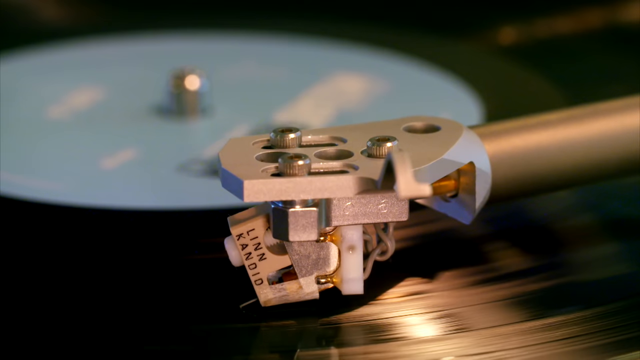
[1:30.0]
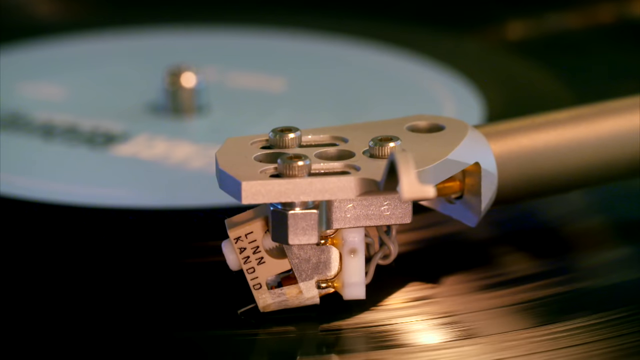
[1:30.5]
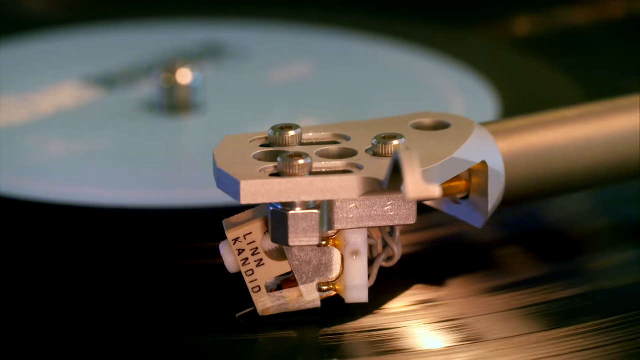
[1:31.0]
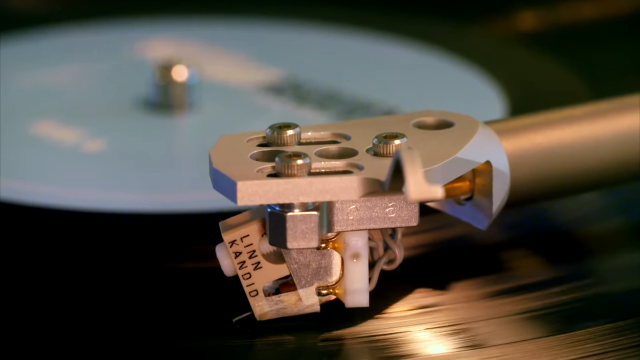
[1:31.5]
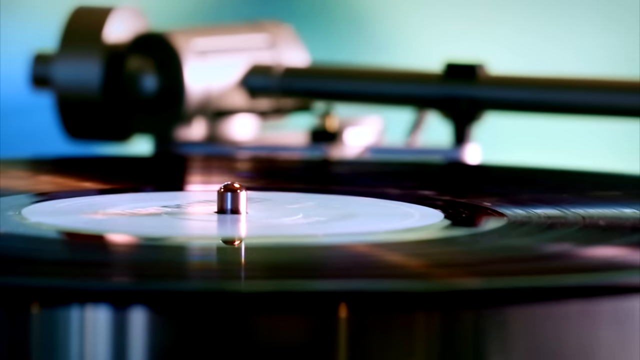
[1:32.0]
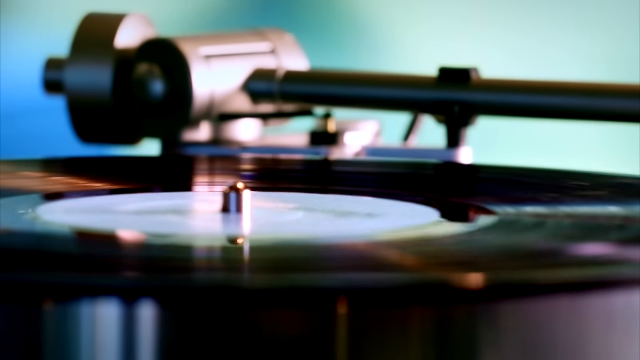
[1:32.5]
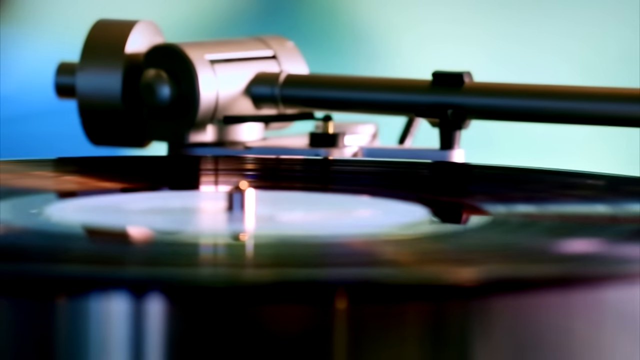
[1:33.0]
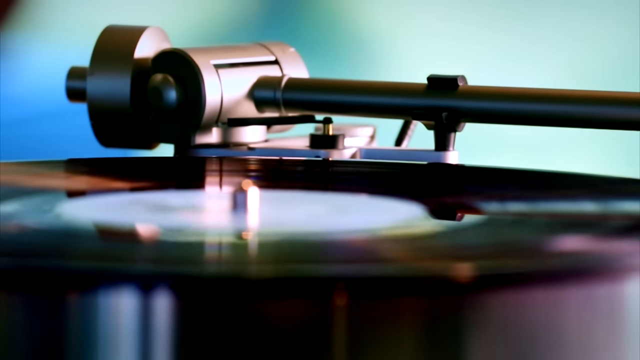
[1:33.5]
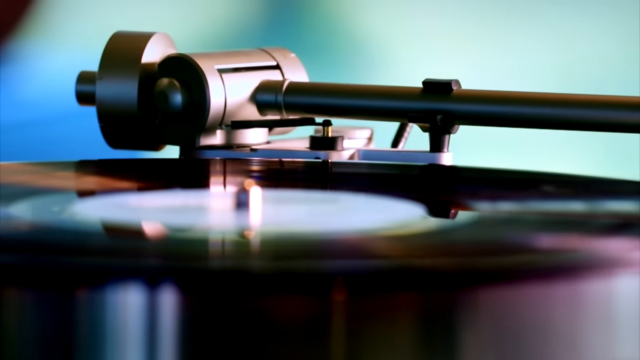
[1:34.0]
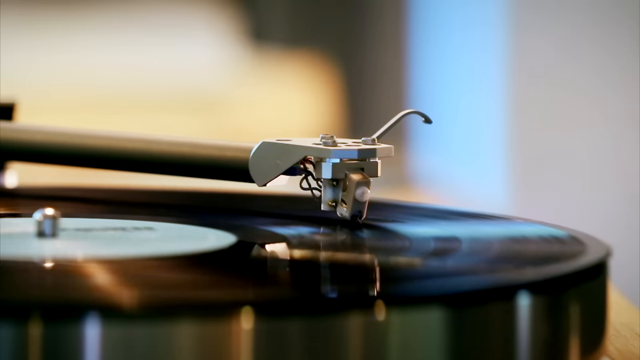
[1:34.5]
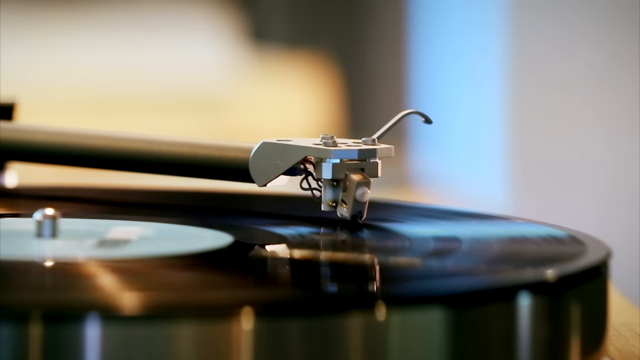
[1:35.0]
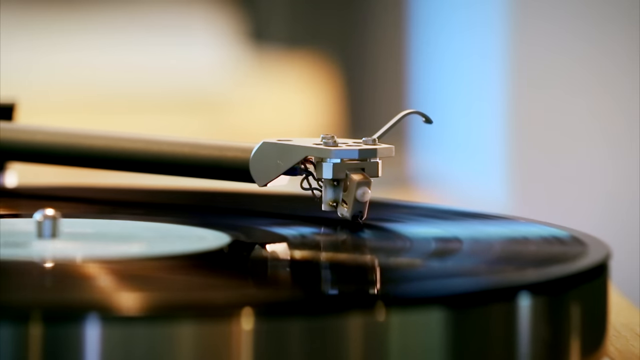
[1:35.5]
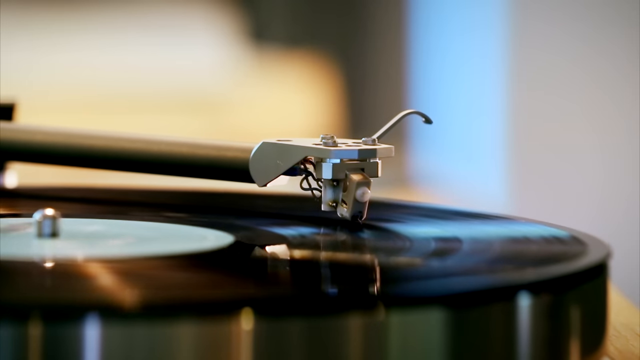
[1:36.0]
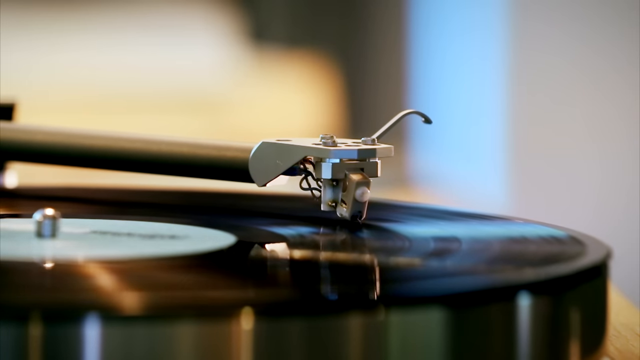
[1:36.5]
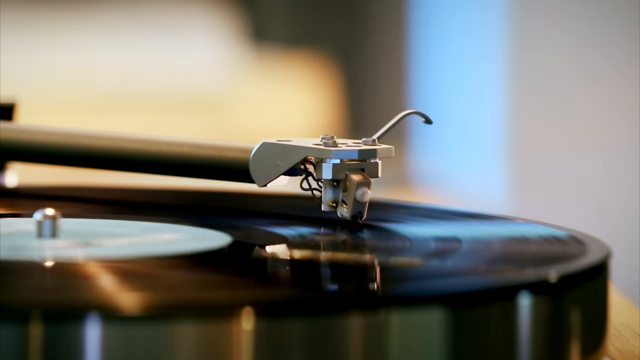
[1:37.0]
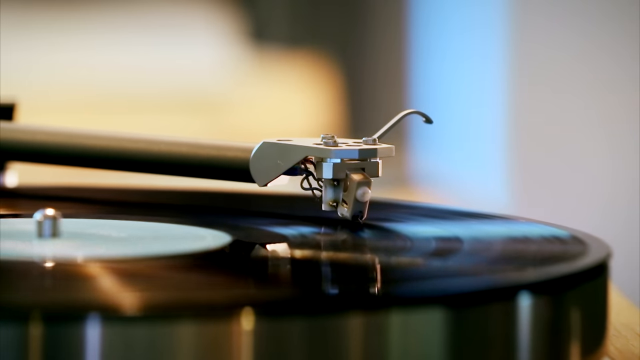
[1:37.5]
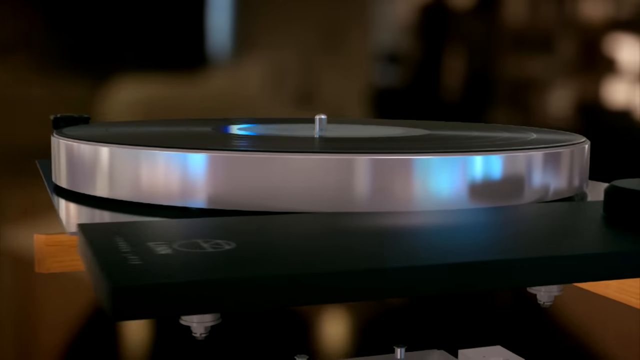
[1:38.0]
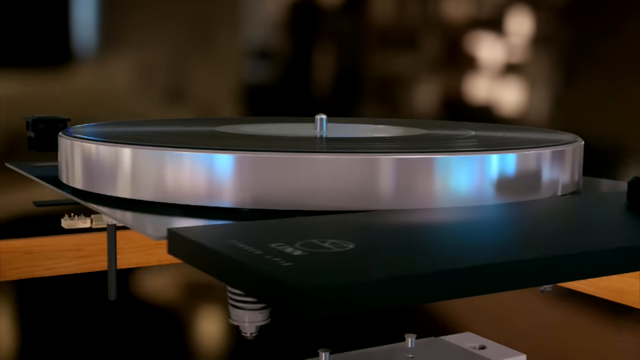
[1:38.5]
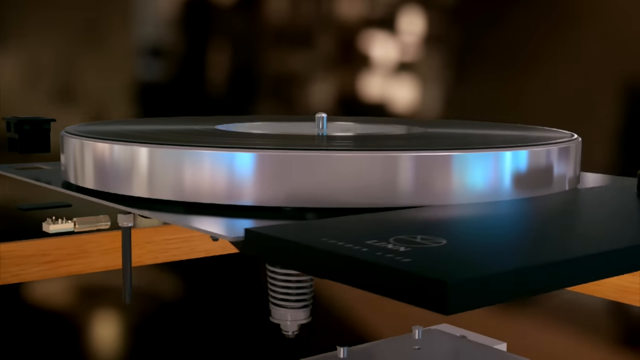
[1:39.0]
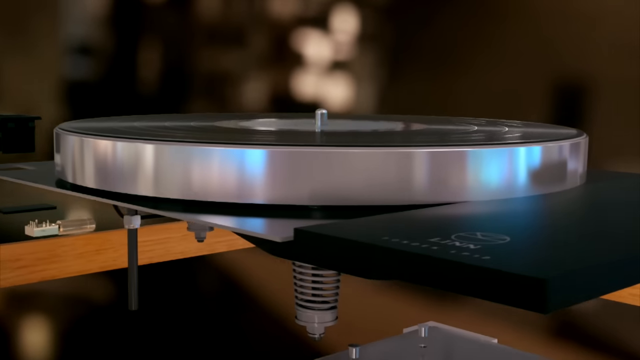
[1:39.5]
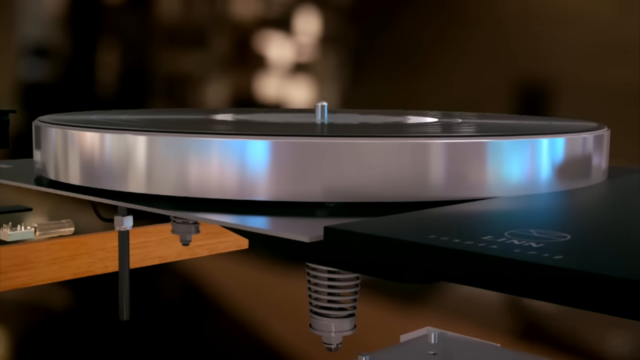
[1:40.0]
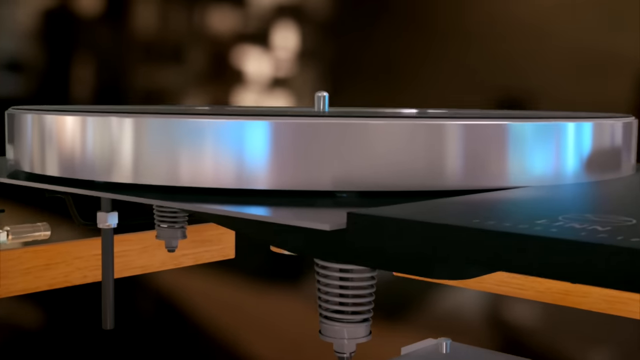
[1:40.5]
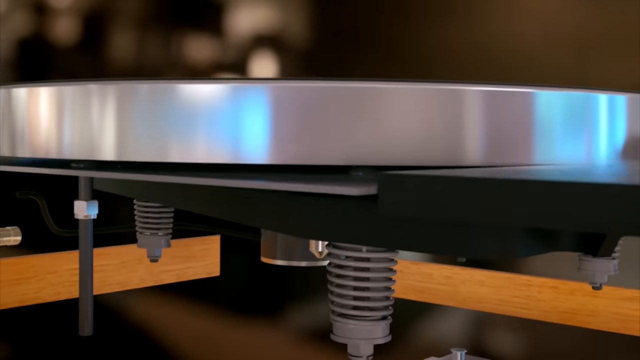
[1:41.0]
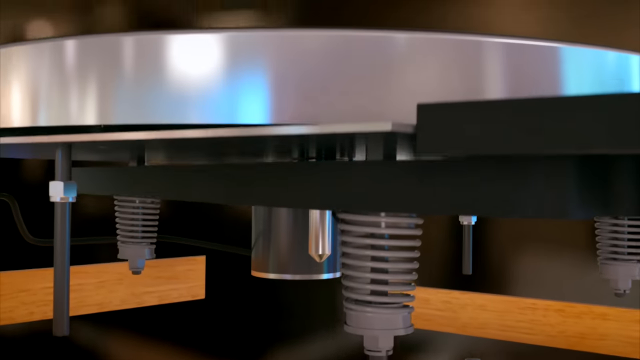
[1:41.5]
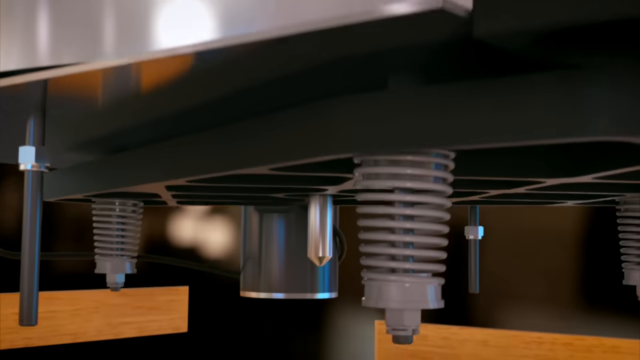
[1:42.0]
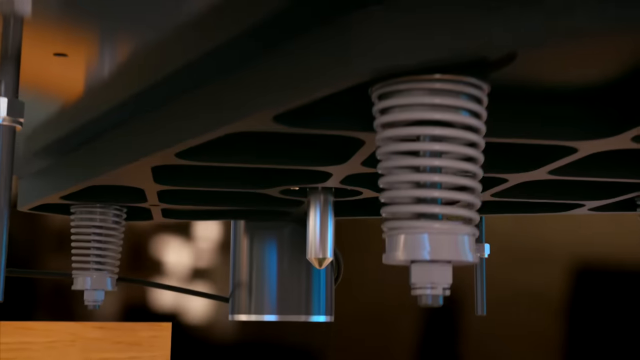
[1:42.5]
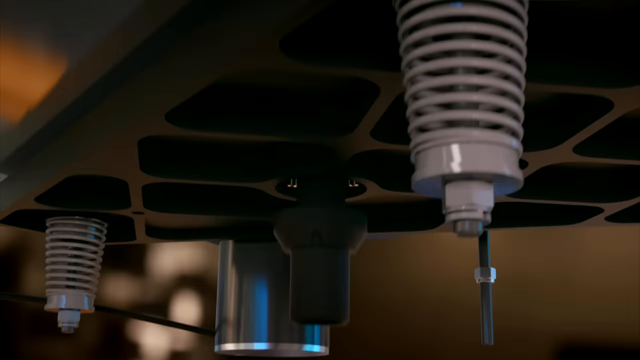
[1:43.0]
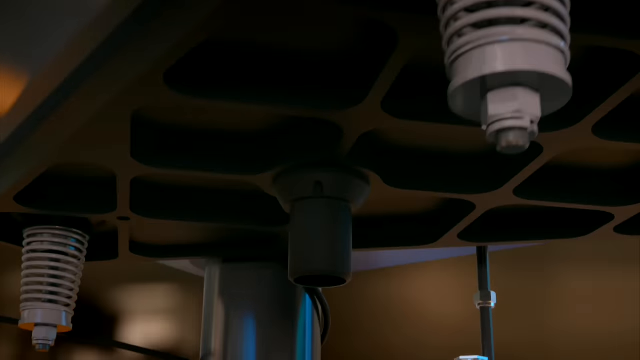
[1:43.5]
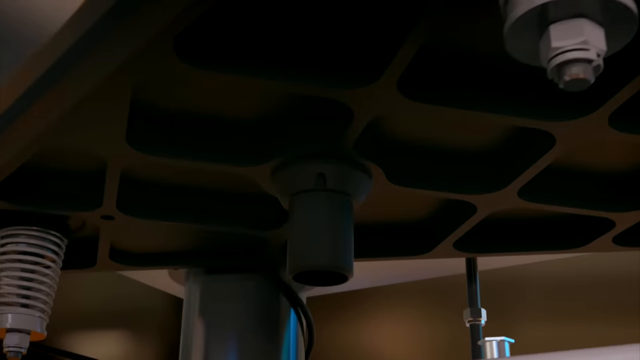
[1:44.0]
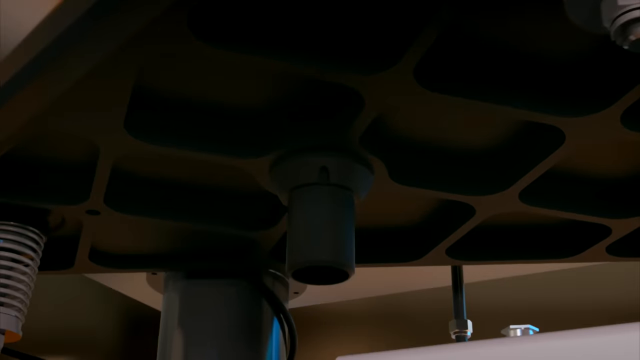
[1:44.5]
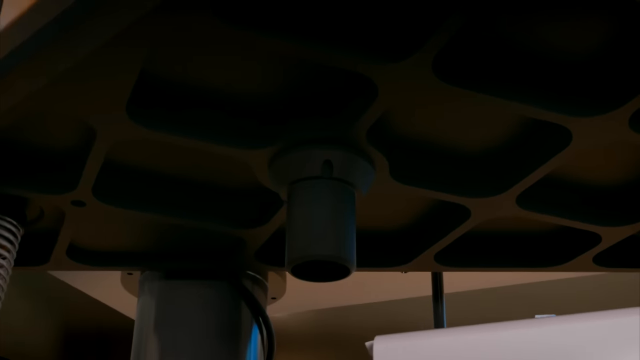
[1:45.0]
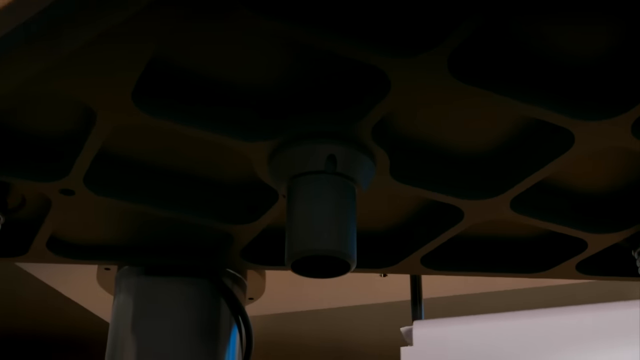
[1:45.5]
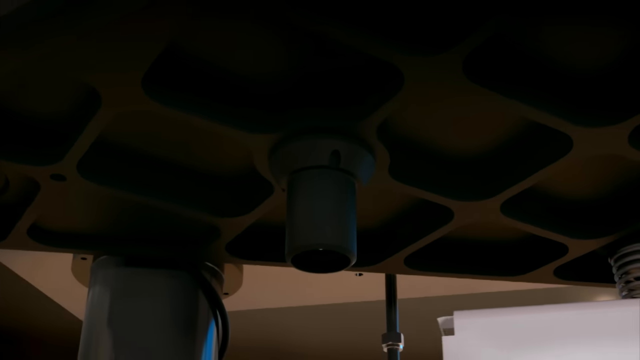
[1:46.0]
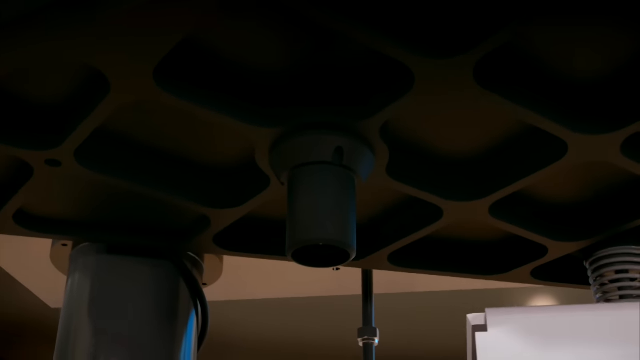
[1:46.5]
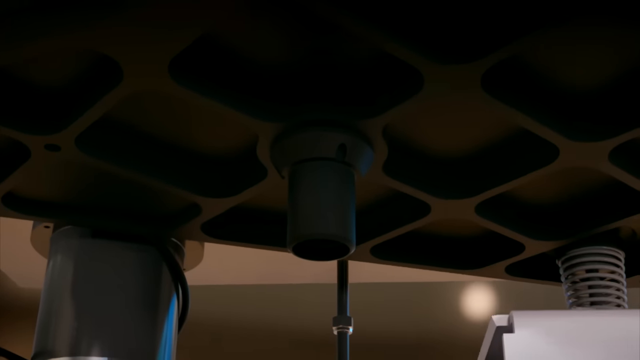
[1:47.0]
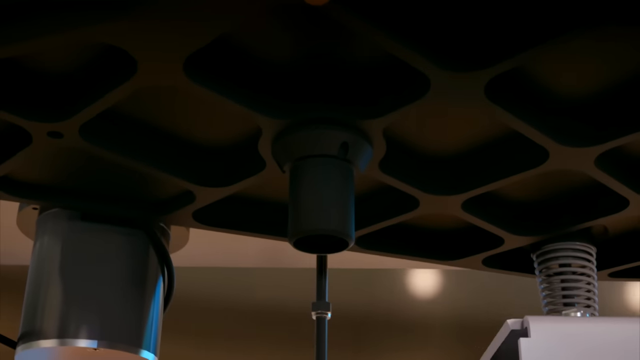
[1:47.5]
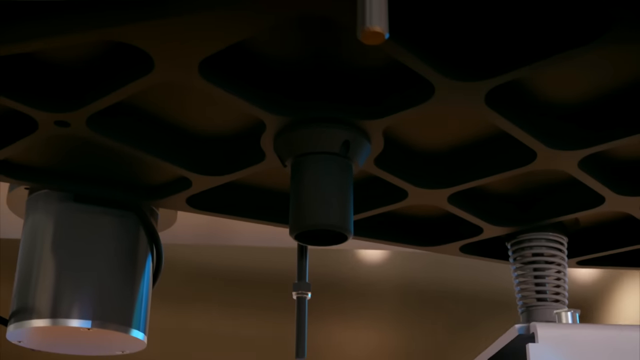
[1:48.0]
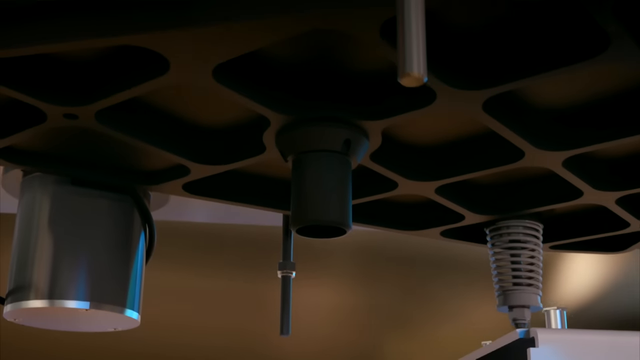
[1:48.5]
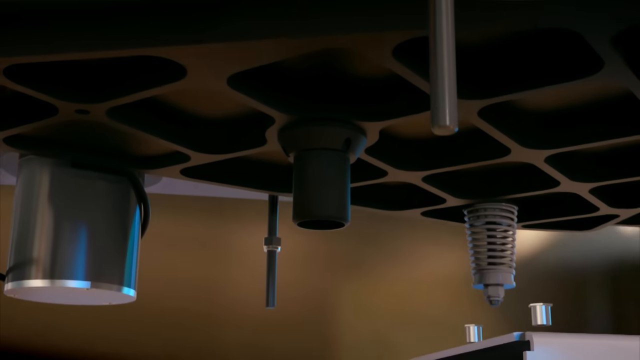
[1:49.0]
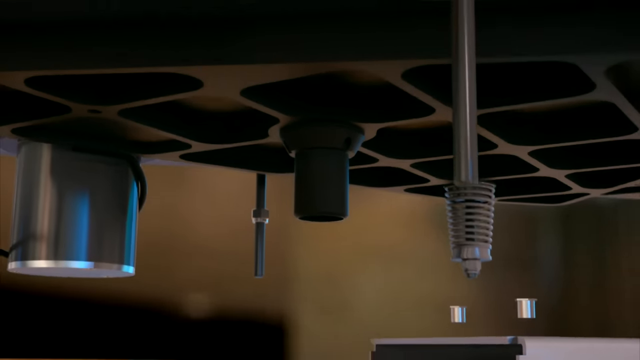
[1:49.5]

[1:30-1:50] The view is zoomed in on the record player again, with cinematic transitions of it playing in its normal form while highlighting the components that make it up, especially the handle, from different angles as the record player keeps playing. It then transitions to another expanded form of the record player broken down into compartments, with bolts, screws and springs coming together in a layered format to build it up. The expanded form is very detailed and 3D, emphasizing the technology and all the components used to make the record player. Some branding showing the manufacturer is visible on the record and the record player.